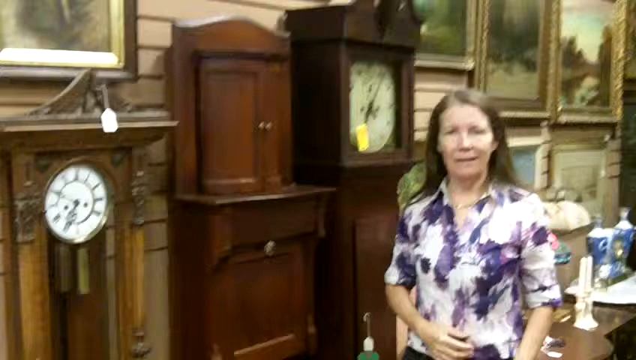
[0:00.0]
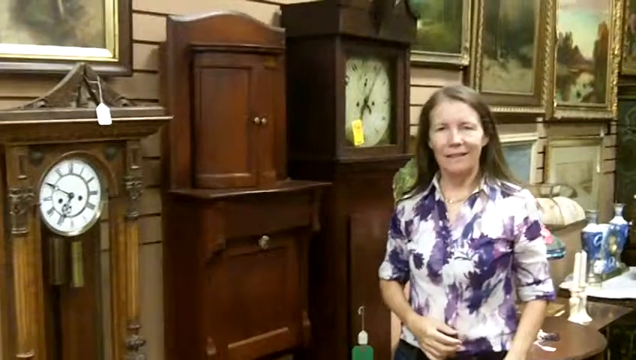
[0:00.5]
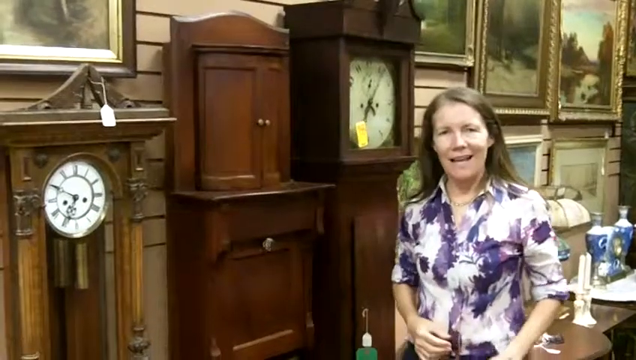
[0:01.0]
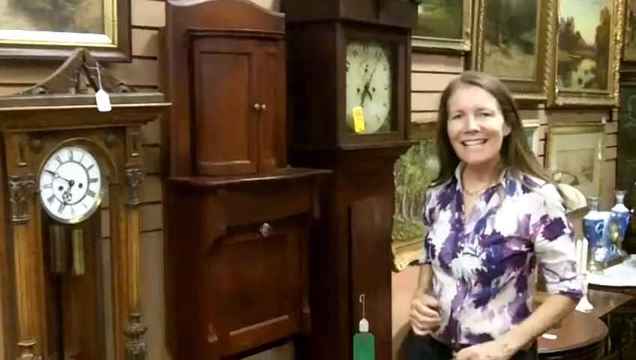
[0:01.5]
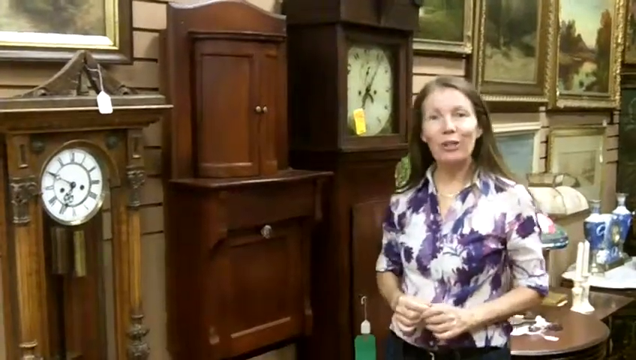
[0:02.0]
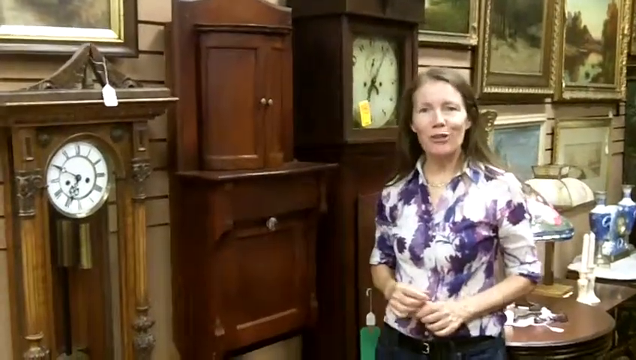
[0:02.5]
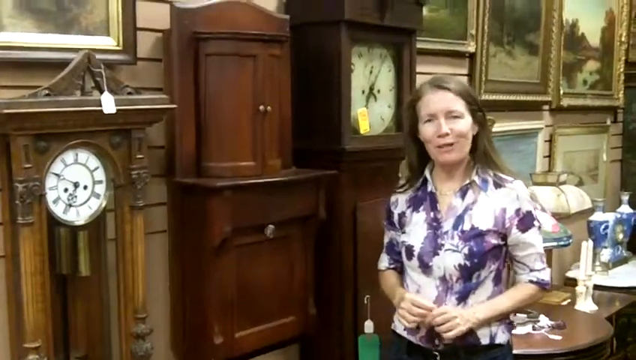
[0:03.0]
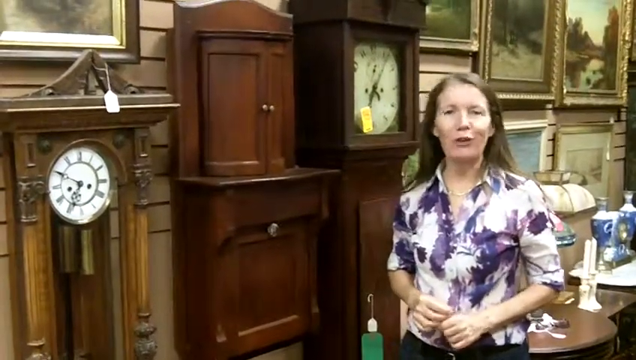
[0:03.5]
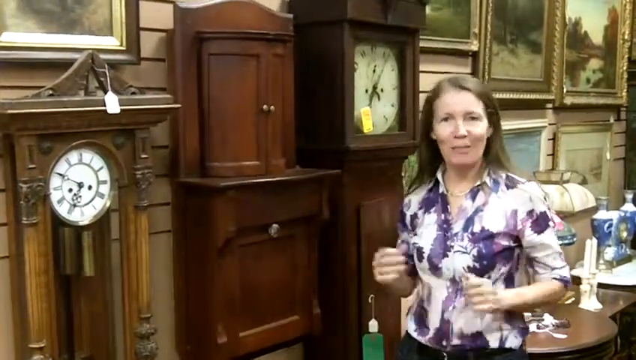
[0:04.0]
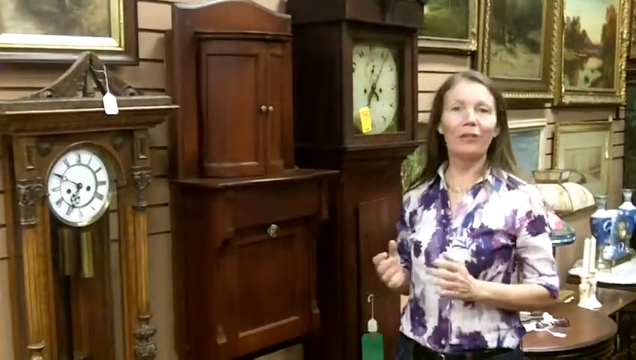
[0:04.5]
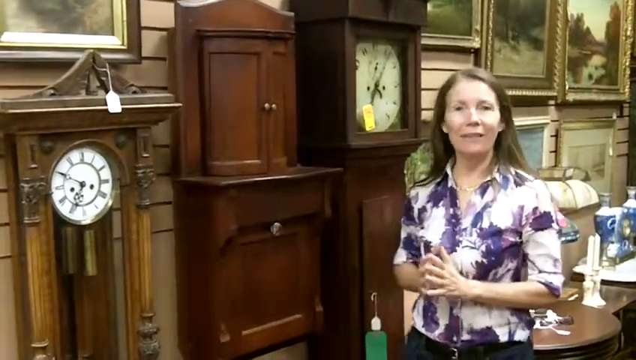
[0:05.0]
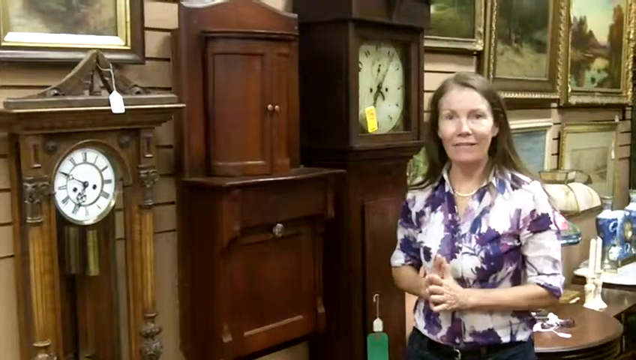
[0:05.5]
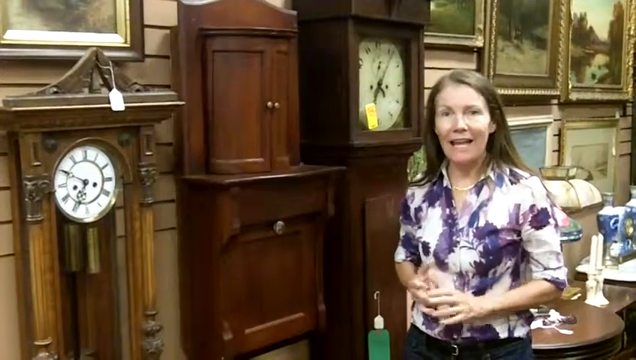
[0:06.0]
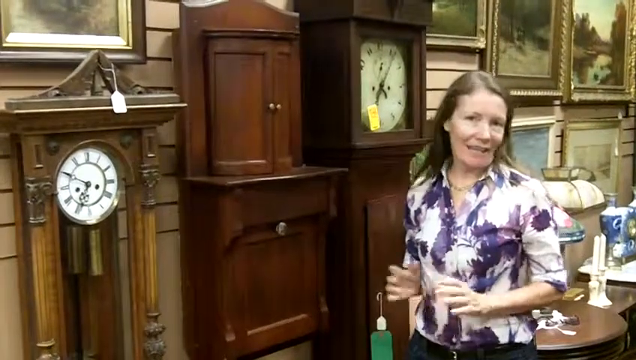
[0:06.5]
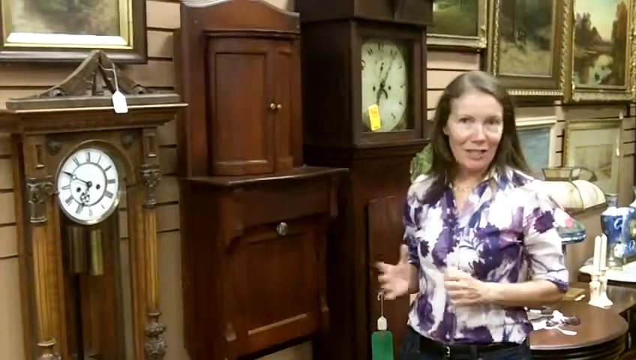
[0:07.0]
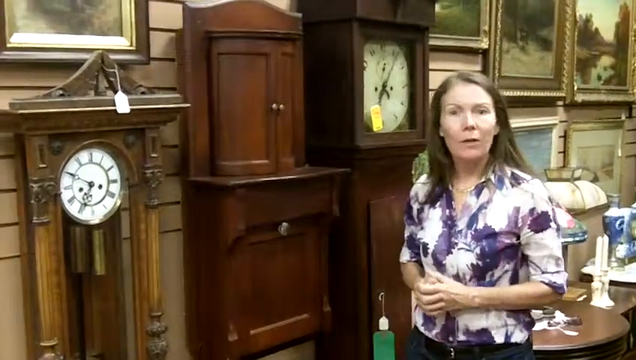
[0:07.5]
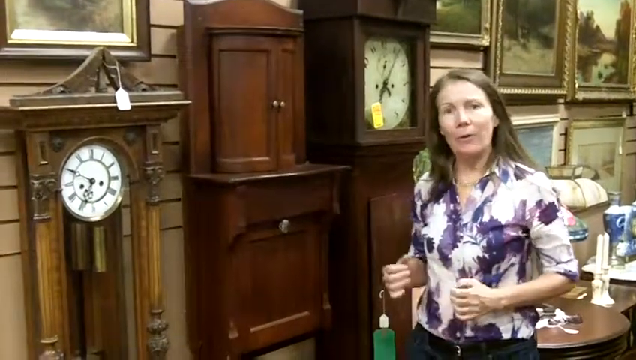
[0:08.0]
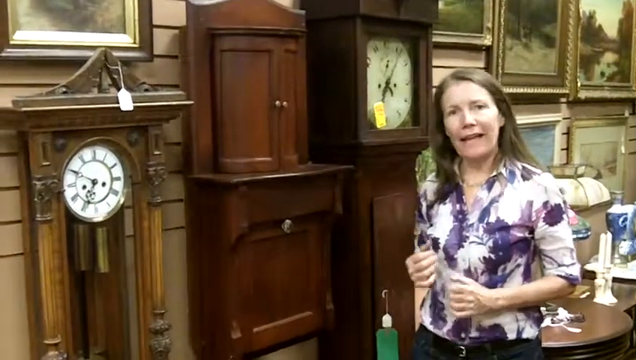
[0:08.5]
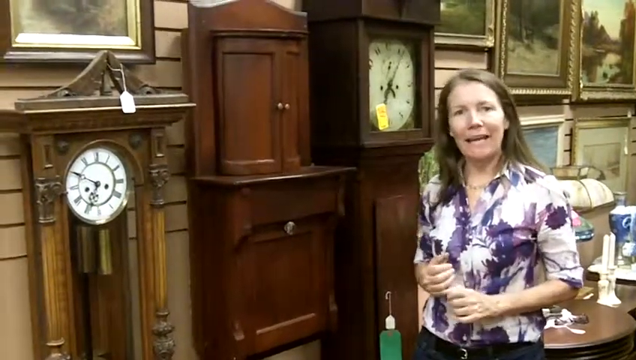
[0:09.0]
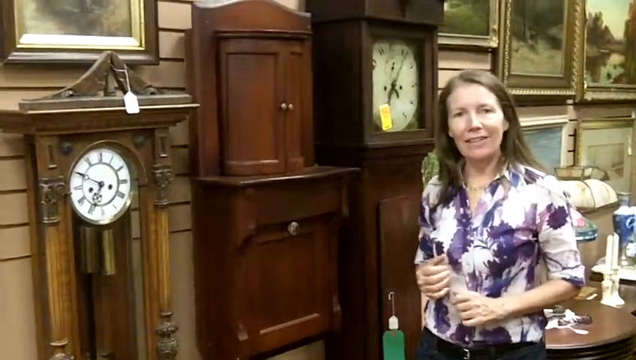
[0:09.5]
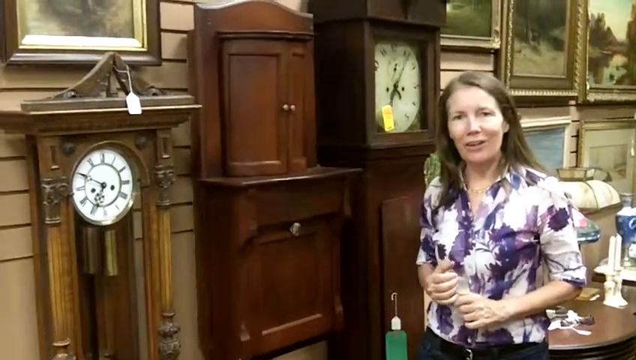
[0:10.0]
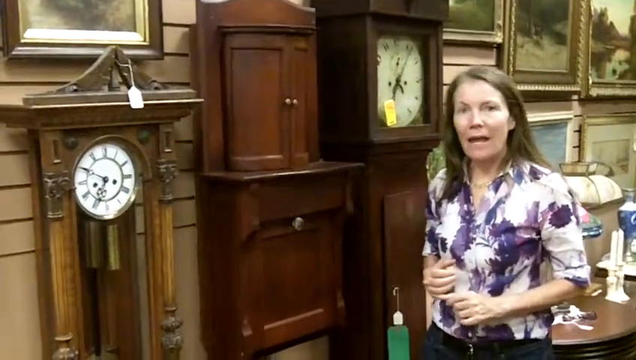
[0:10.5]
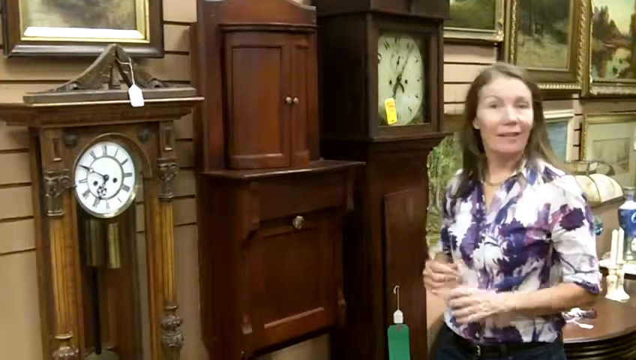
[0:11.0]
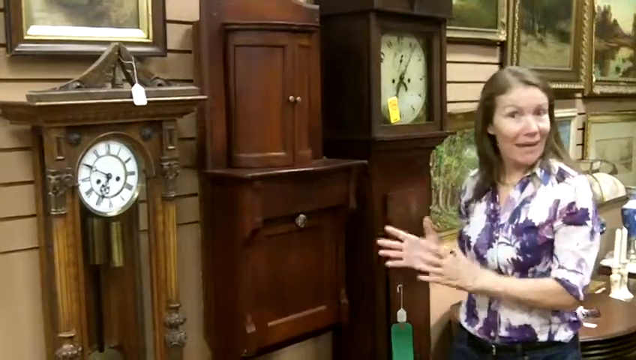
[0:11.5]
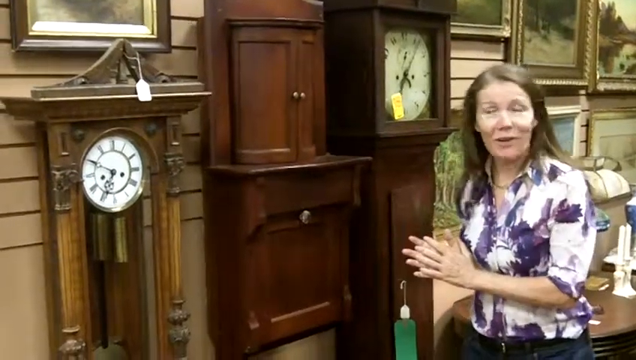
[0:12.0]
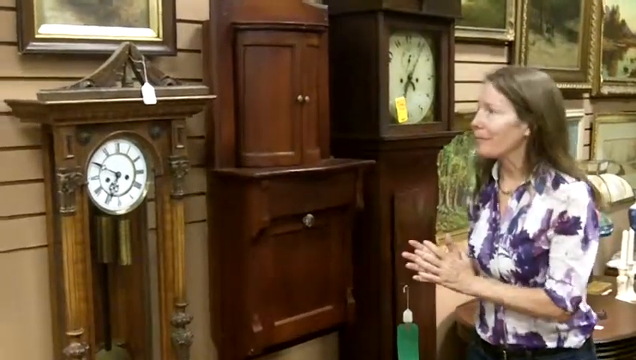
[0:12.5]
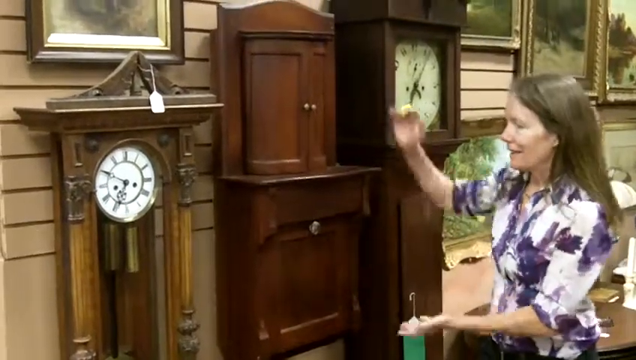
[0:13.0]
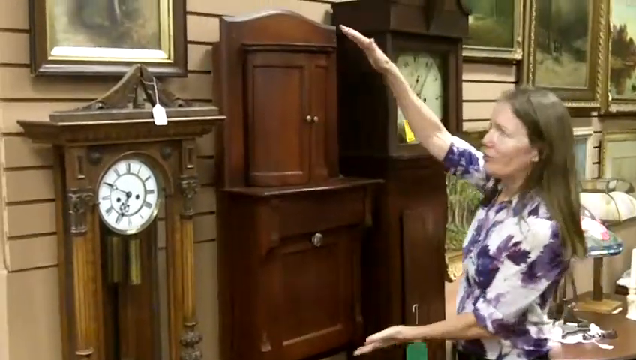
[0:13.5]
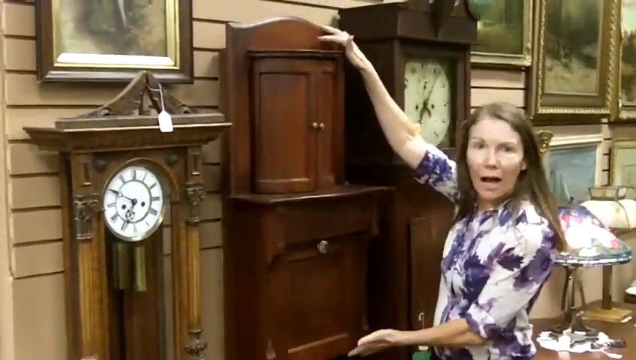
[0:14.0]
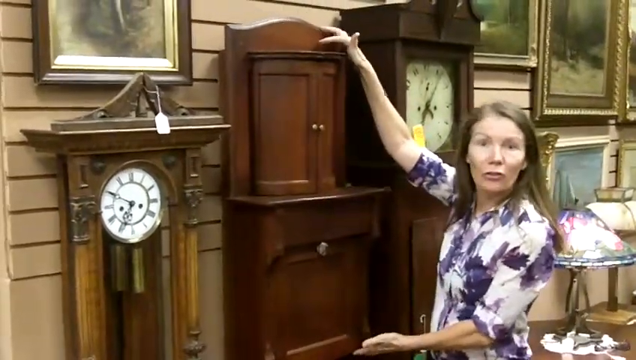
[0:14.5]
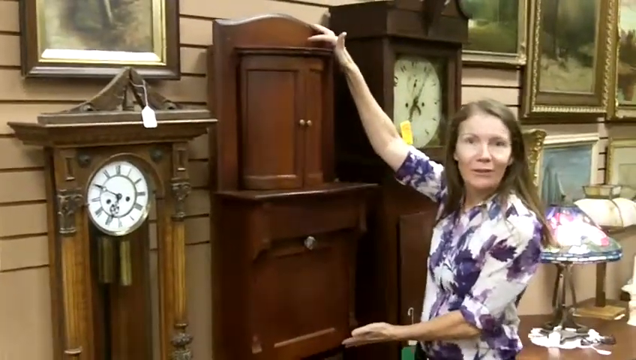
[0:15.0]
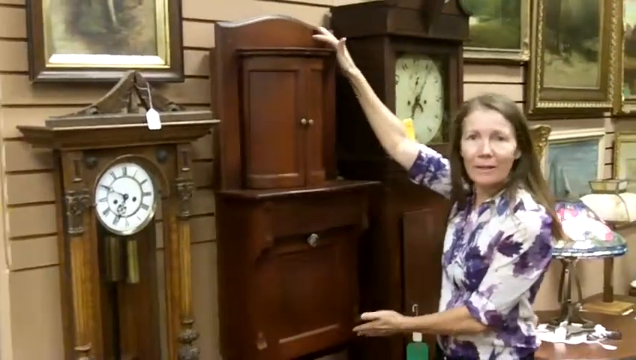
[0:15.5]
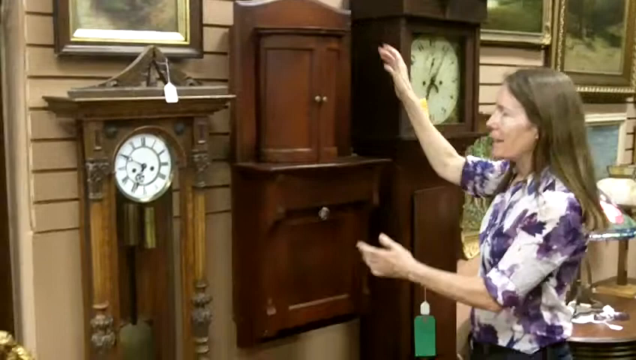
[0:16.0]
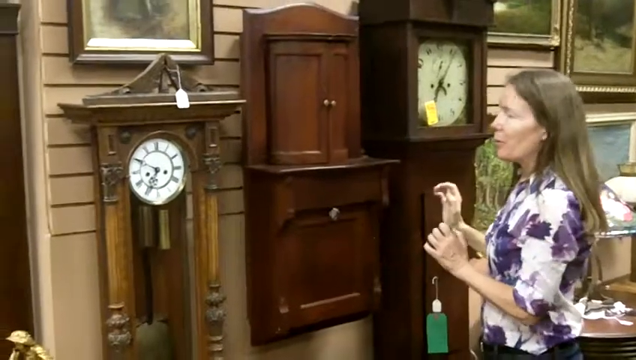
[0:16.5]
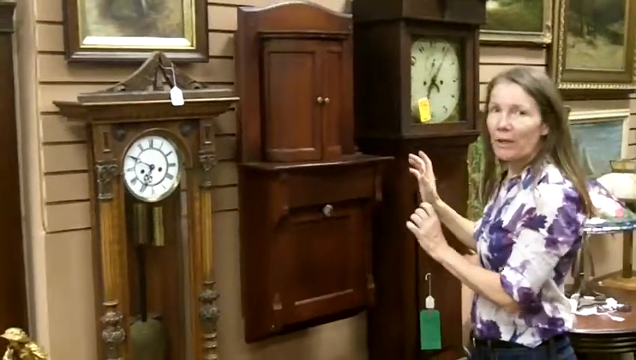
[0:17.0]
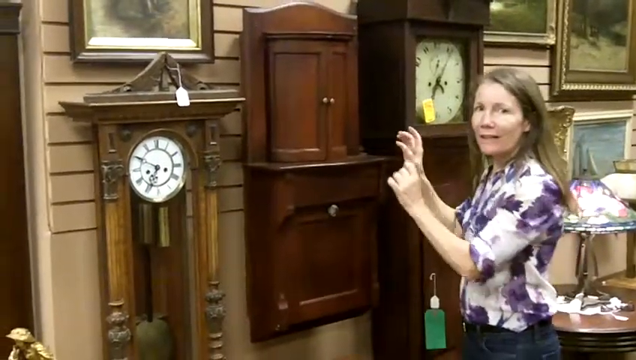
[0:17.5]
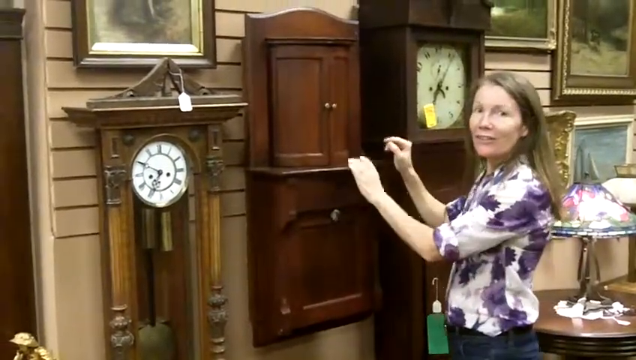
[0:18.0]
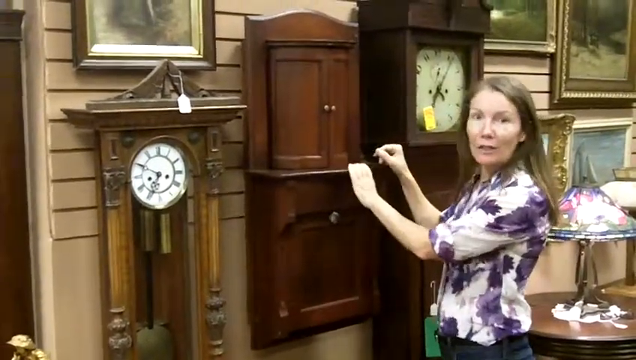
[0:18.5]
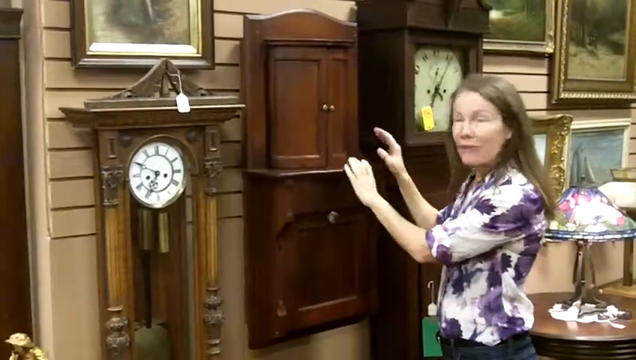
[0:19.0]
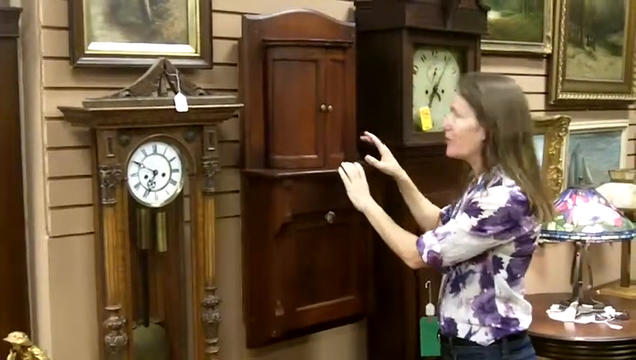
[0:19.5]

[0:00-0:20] A white woman with long hair, which seems to be blonde, wears a shirt with several colors, including purple, white and some dark blue. She keeps talking and shows a brown cupboard made of planks, using her hands to indicate its size. She also uses her hands to show a table that seems to be mounted on the wall. In the background there is a table behind the woman with items on it, and the wall has many framed pictures of different sizes. There are also items that look like a cupboard but have clocks in them; the clock is white and circular. The woman looks about 48 or 49 years old.